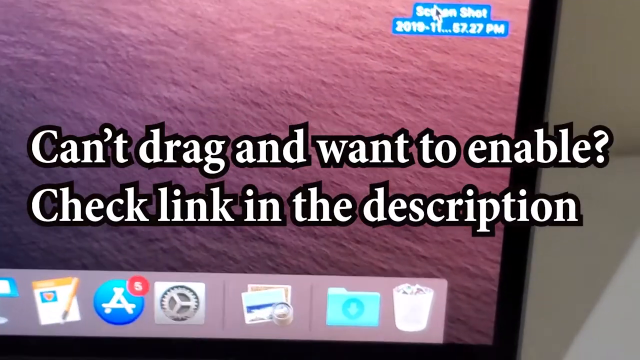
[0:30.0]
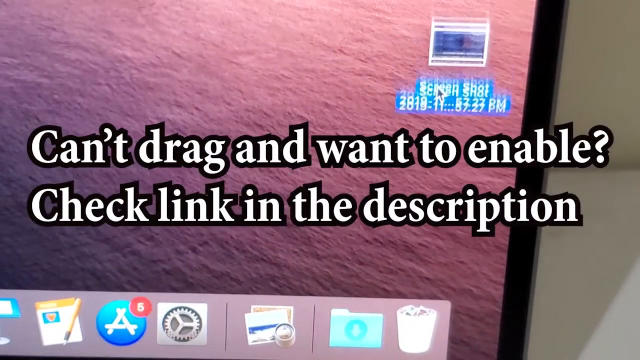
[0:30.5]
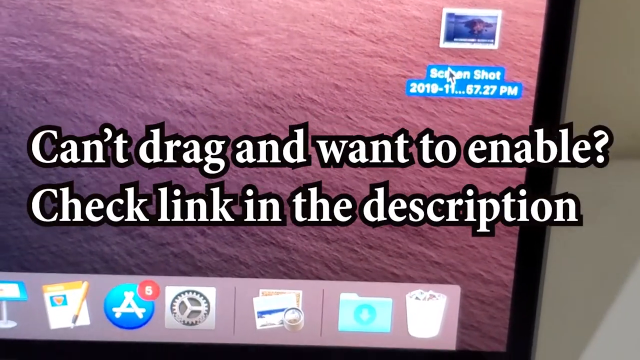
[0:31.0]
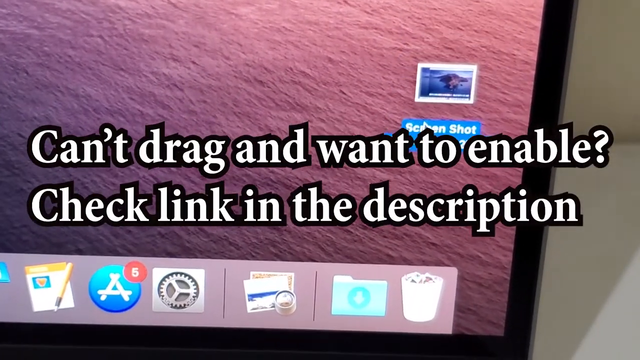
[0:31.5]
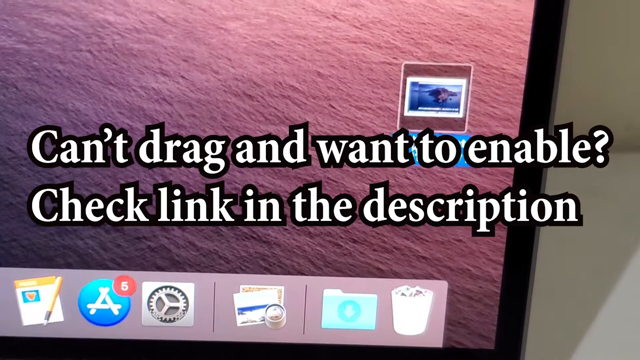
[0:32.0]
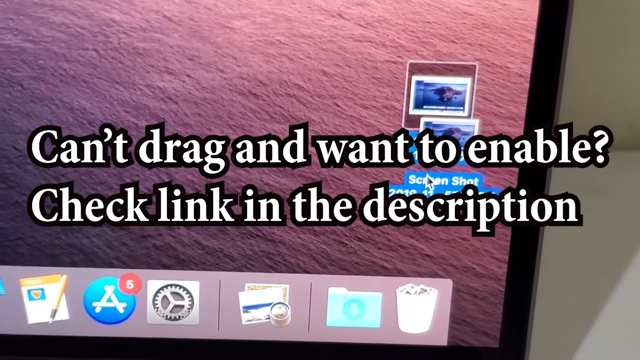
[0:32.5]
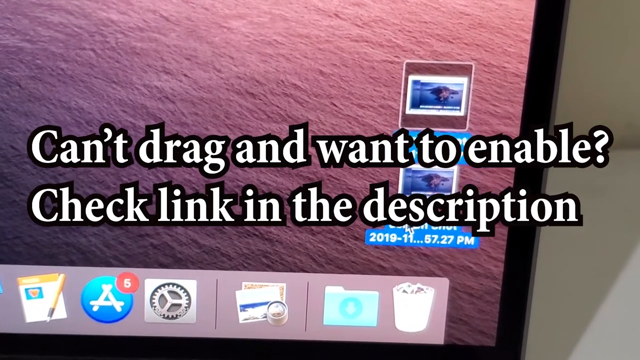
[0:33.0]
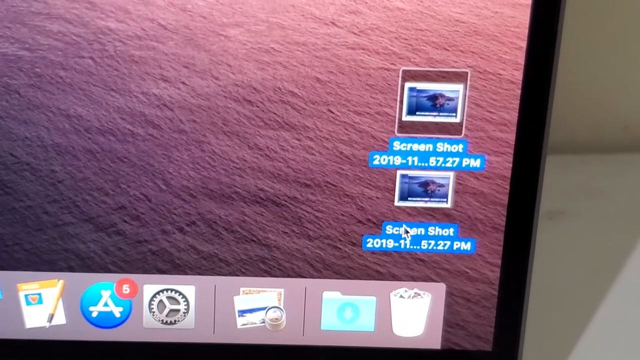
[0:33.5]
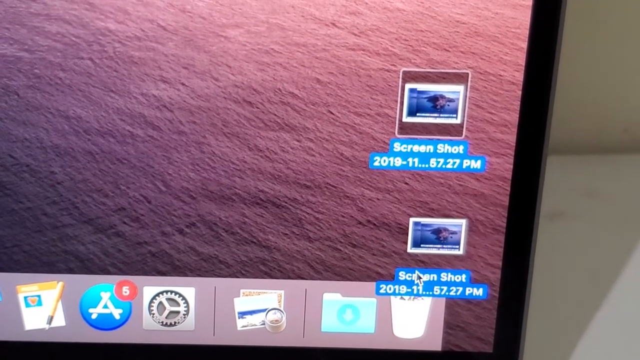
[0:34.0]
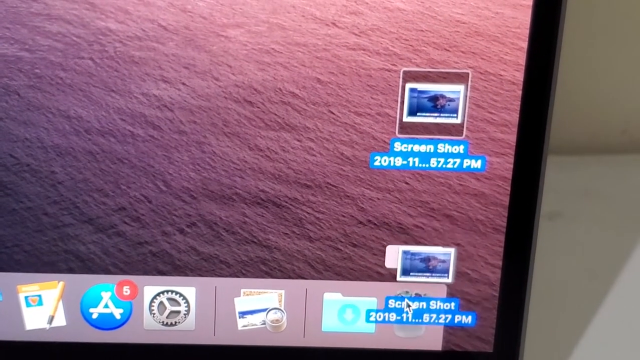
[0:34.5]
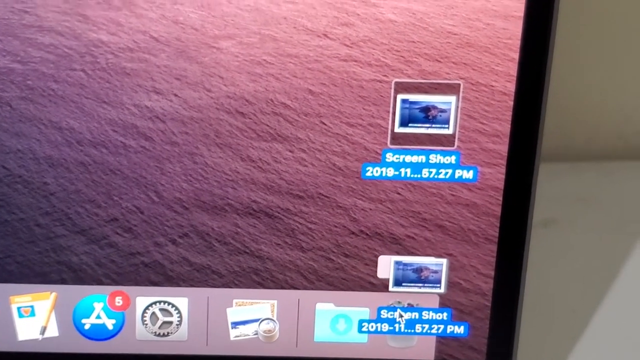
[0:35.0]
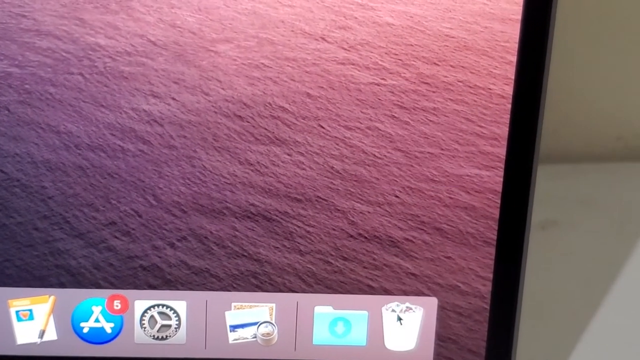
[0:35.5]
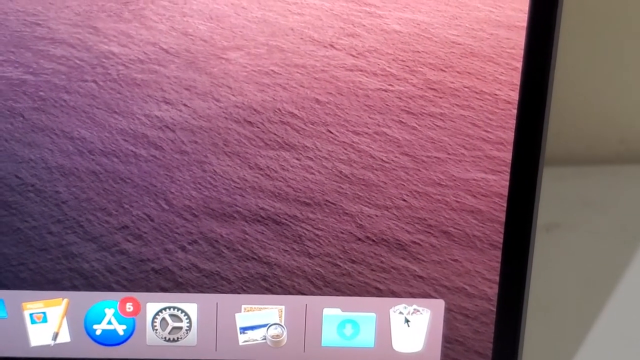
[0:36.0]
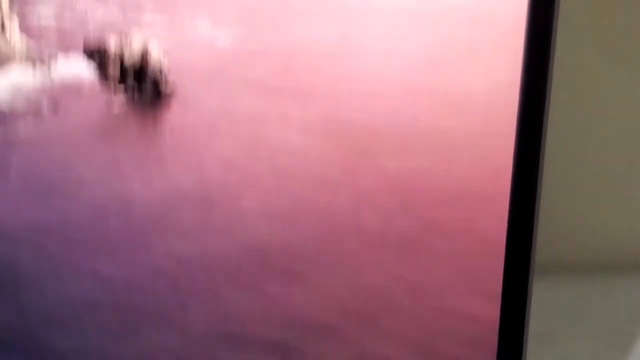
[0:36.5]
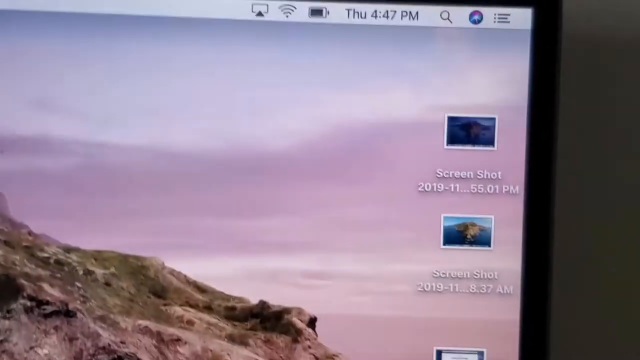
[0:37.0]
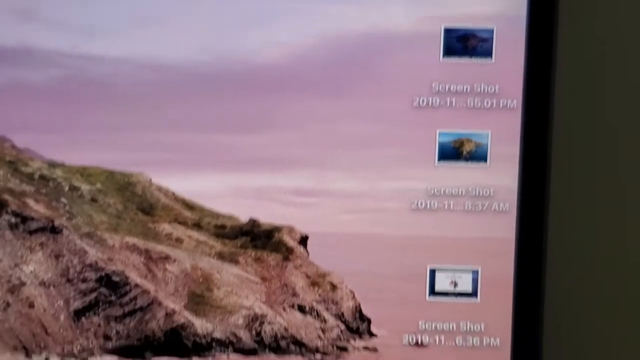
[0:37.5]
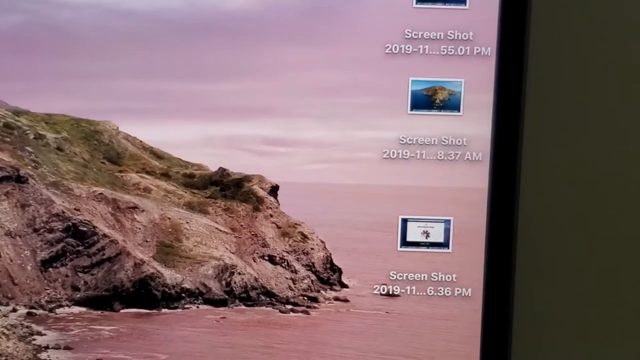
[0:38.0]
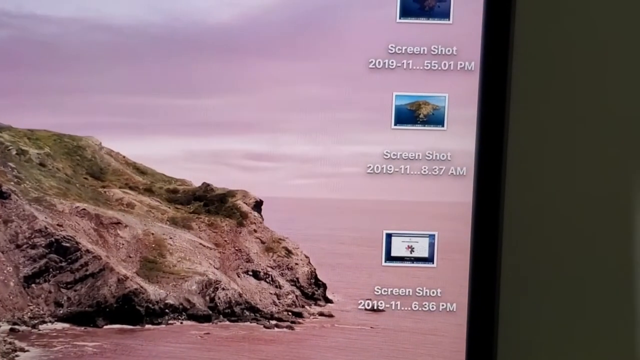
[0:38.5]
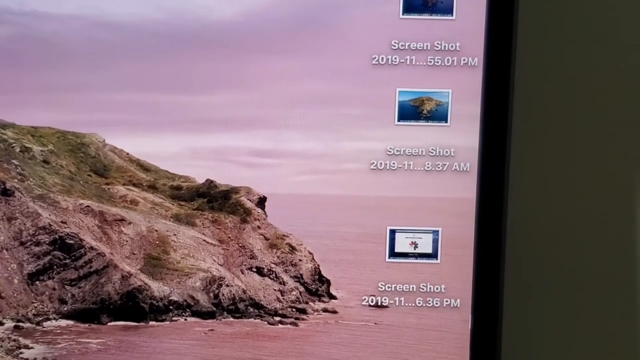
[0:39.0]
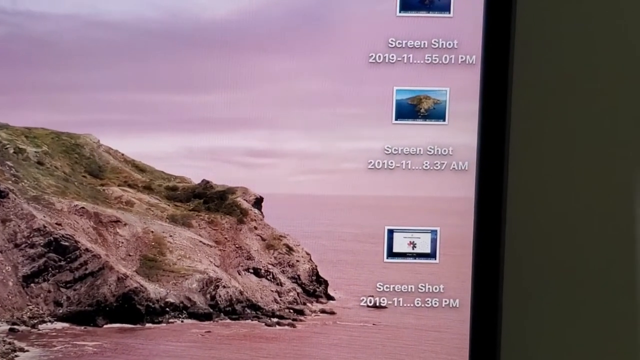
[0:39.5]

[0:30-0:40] The same action is demonstrated, dragging into the trash can, and it apparently does not succeed. The dock shows the App Store with five notifications, Notes, a folder, Photo Lab, System Settings and the trash can. The wallpaper shows something like a rock or a mountainous area. The user seems to be showing the normal way people do this, which turns out not to work.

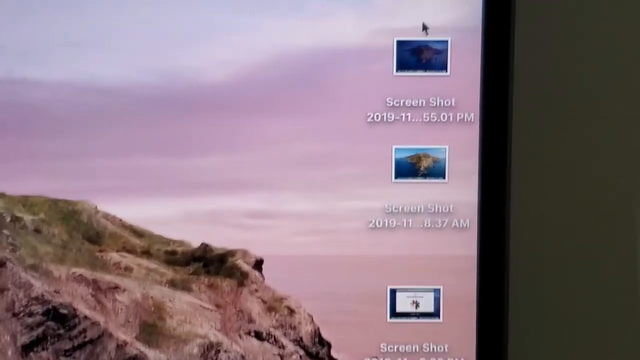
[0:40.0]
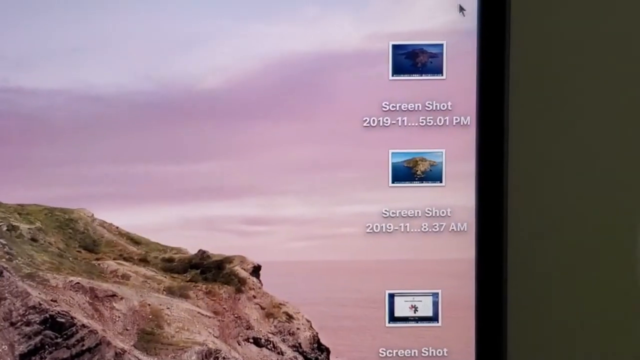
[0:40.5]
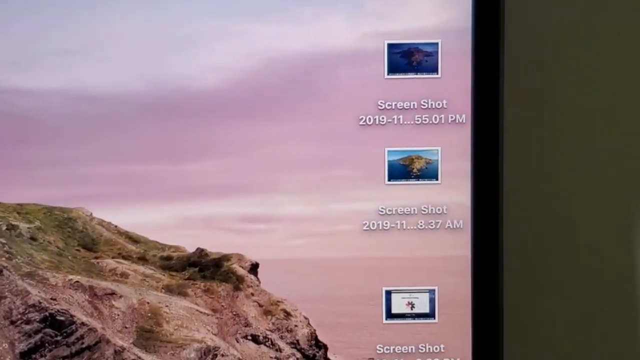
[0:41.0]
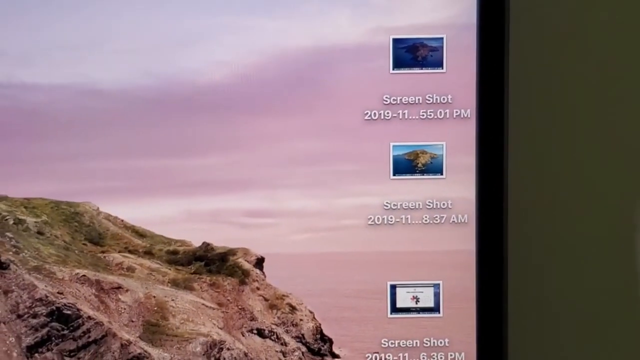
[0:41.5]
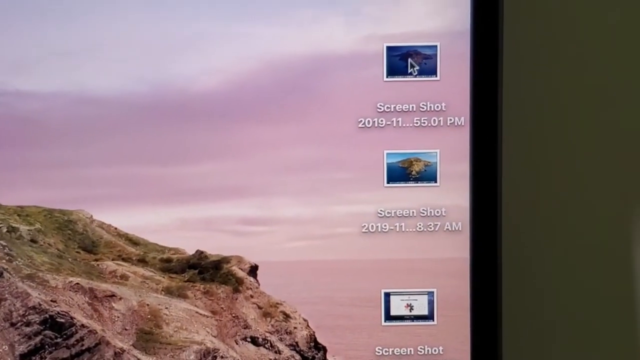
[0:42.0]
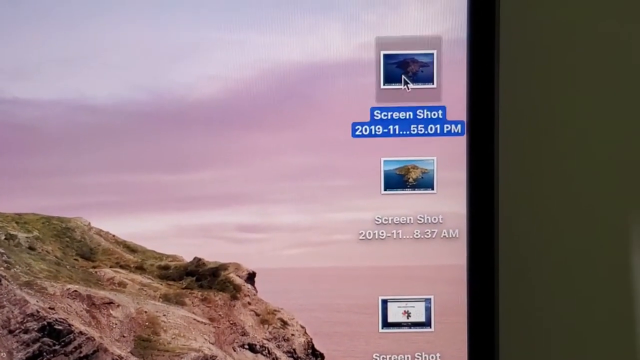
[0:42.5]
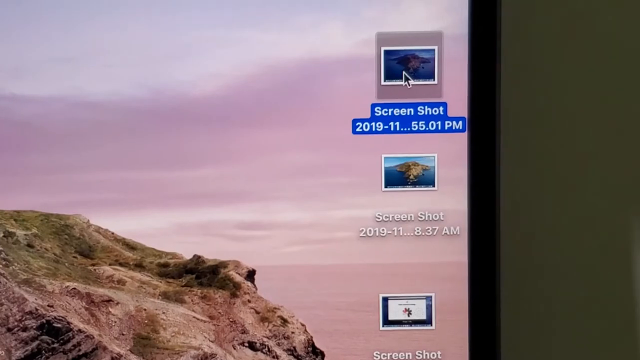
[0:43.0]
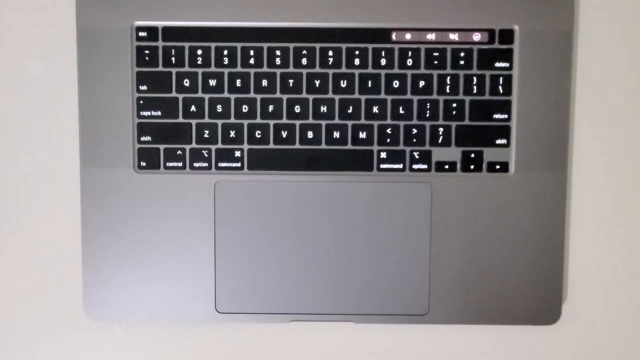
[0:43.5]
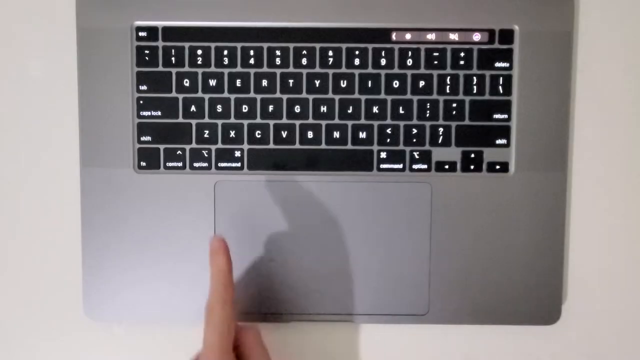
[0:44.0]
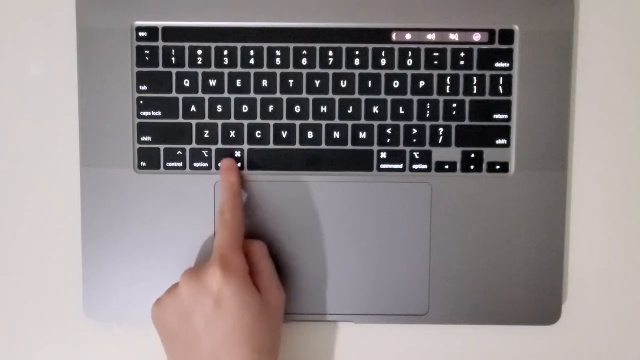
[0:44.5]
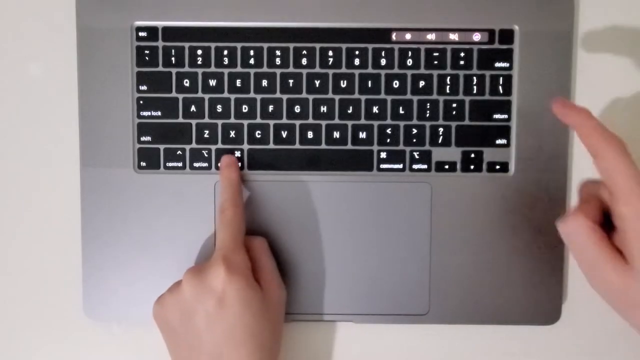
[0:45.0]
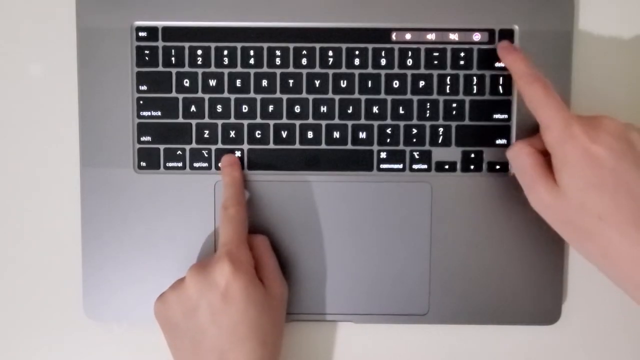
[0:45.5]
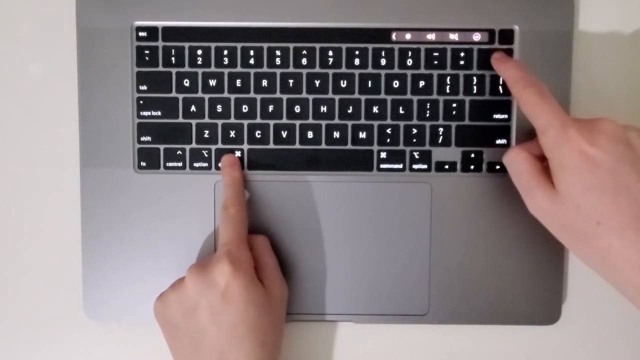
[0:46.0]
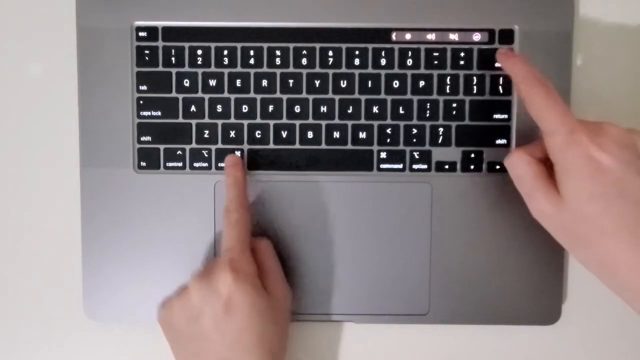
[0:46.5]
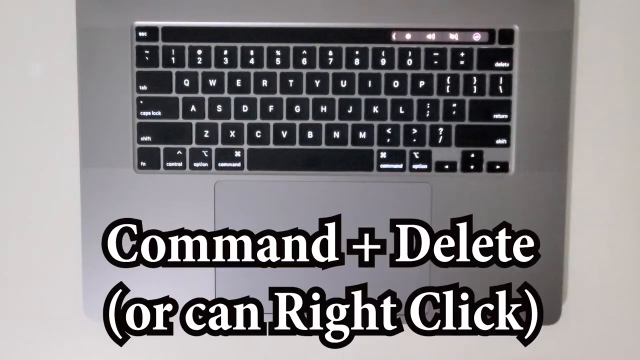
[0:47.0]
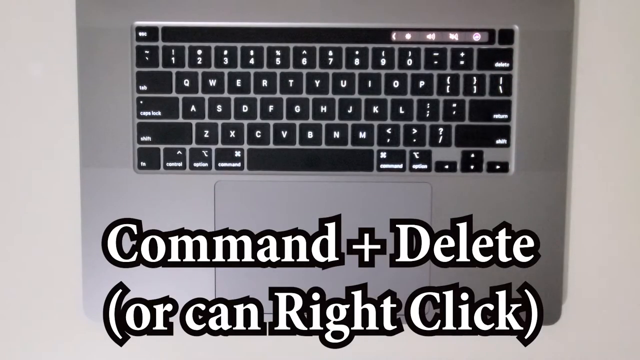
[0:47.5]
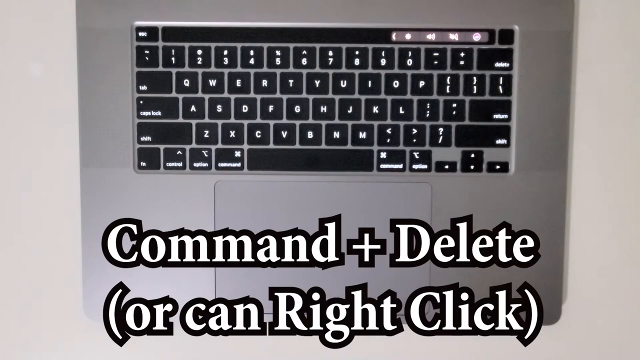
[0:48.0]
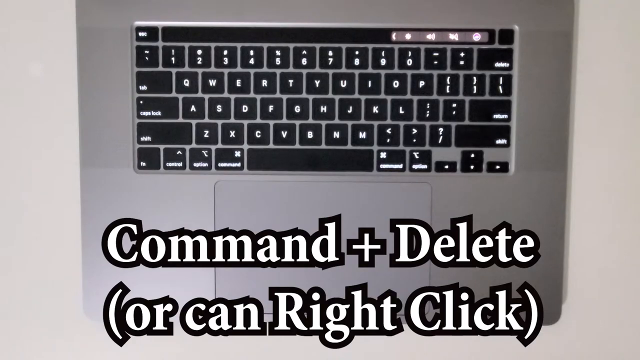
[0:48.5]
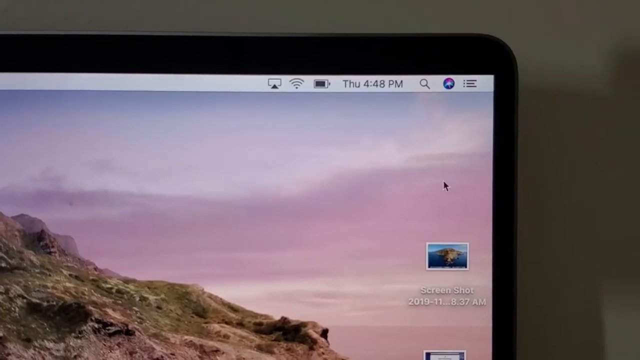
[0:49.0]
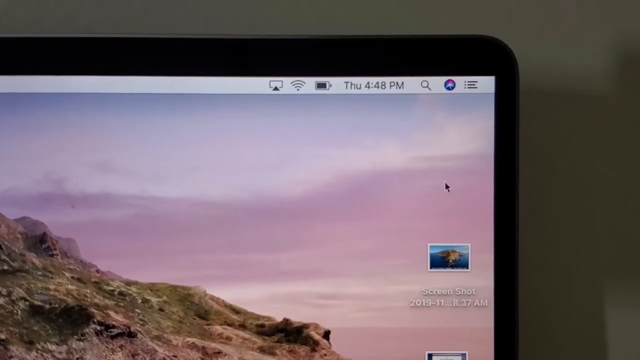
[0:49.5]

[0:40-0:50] The user apparently tries a keyboard shortcut, command plus delete. The keyboard is shown: the number row from 1 to 0, the plus and equals key, the minus and hyphen key, the QWERTY letter keys, the home keys, the command keys, the function keys, the tab key, the esc key, the touch bar, the space bar and the trackpad.